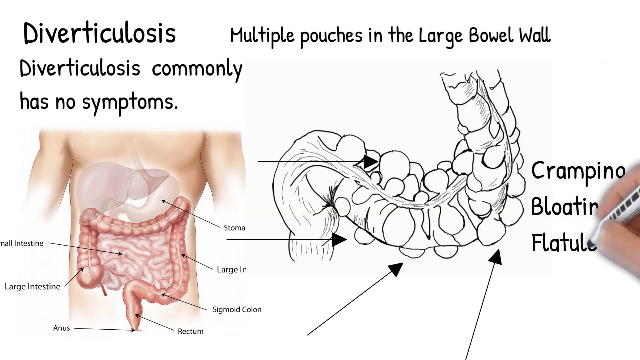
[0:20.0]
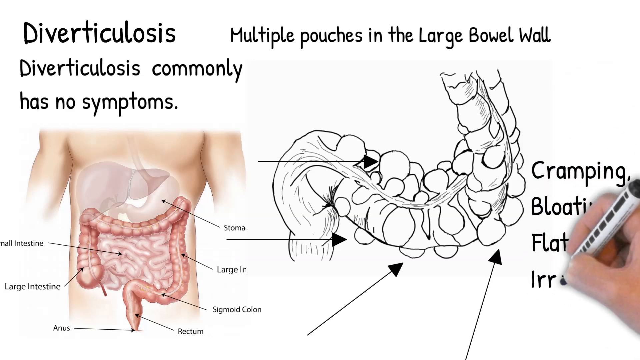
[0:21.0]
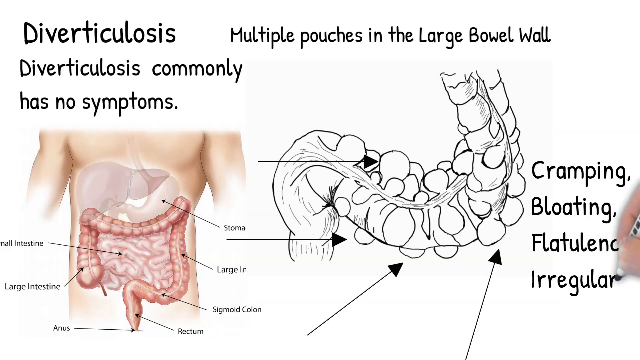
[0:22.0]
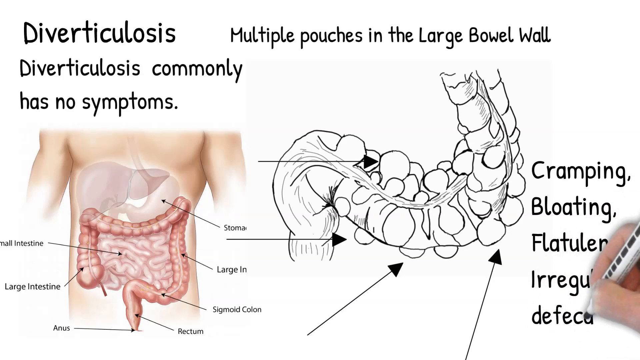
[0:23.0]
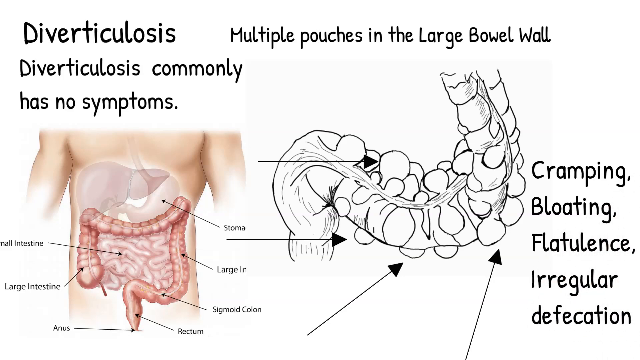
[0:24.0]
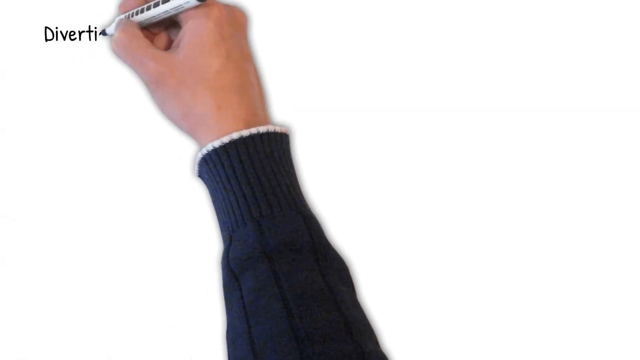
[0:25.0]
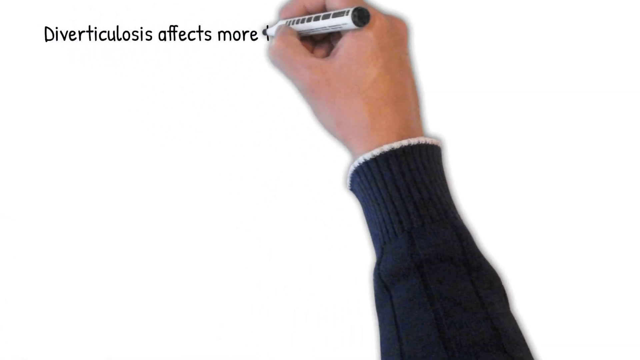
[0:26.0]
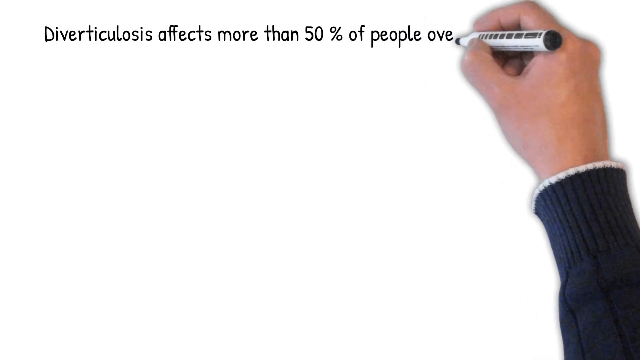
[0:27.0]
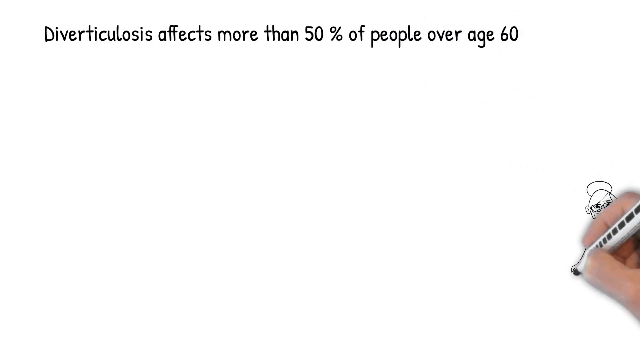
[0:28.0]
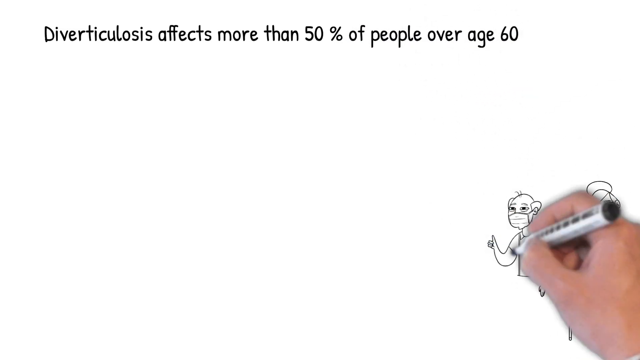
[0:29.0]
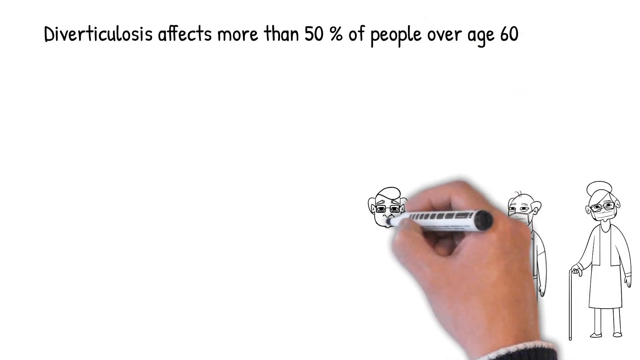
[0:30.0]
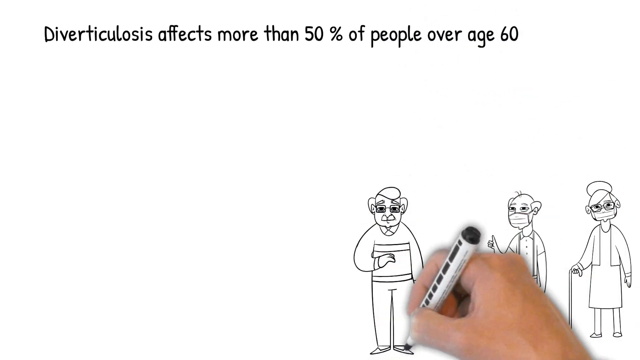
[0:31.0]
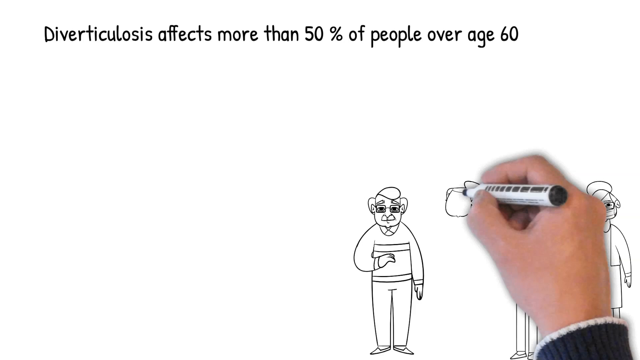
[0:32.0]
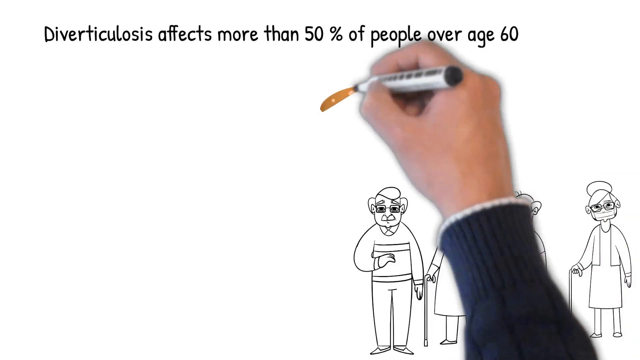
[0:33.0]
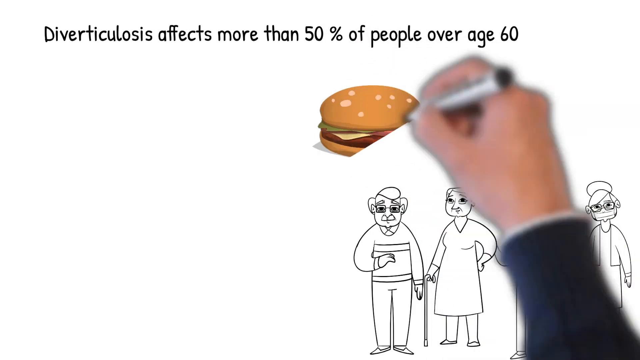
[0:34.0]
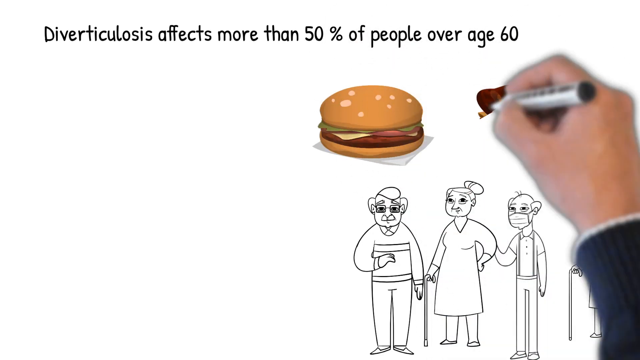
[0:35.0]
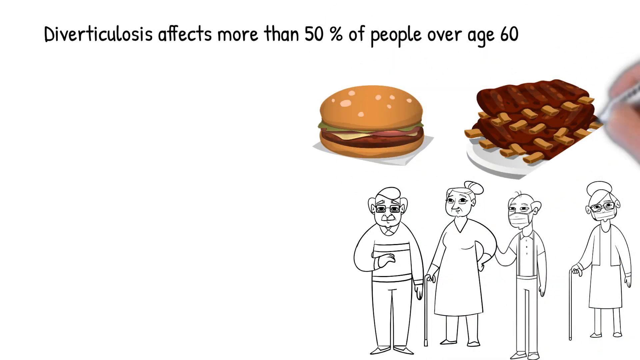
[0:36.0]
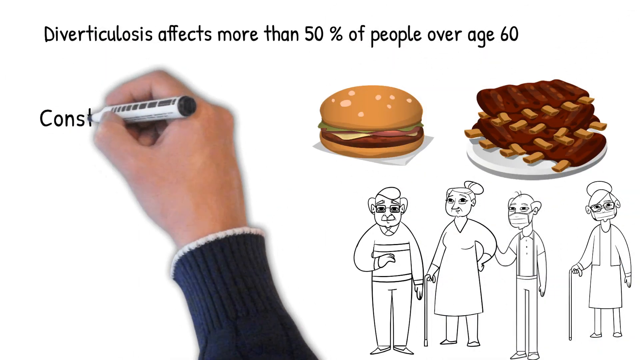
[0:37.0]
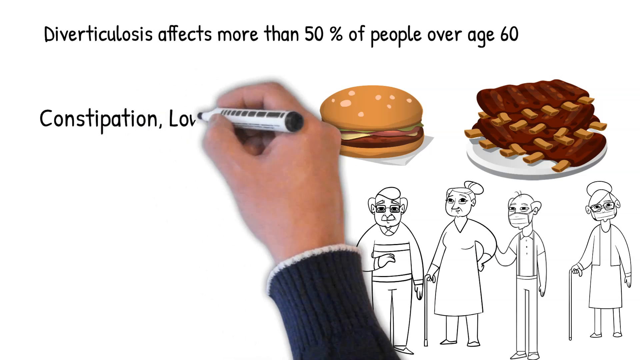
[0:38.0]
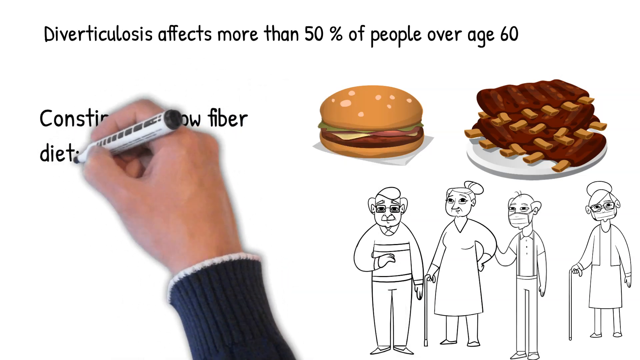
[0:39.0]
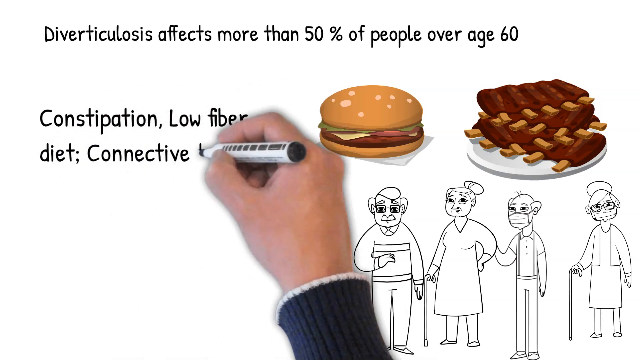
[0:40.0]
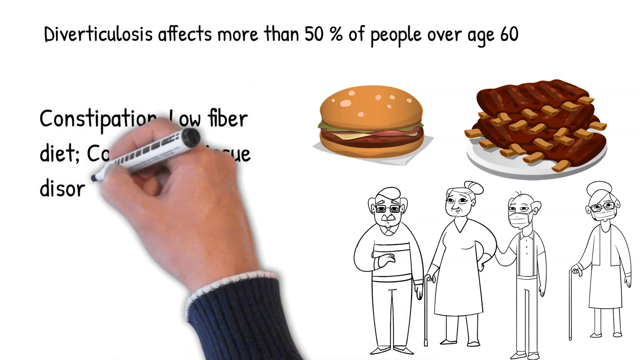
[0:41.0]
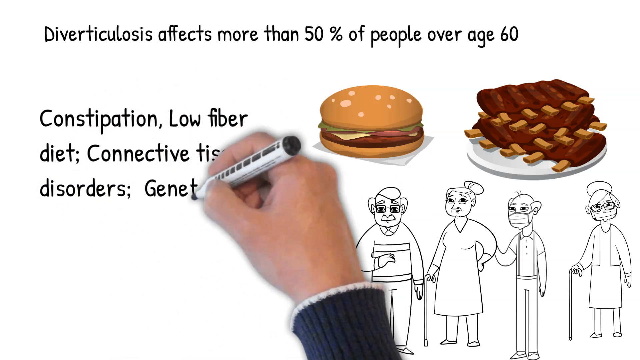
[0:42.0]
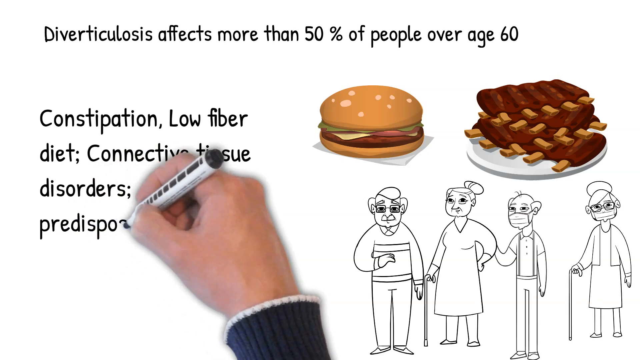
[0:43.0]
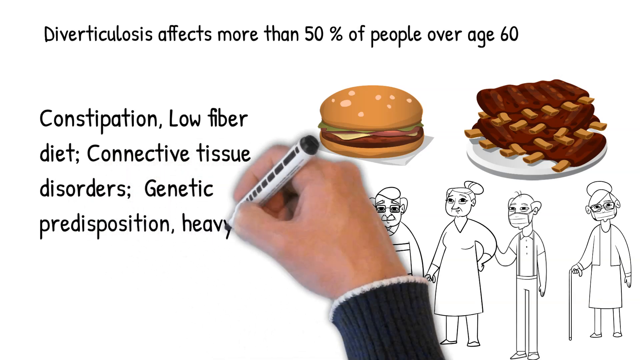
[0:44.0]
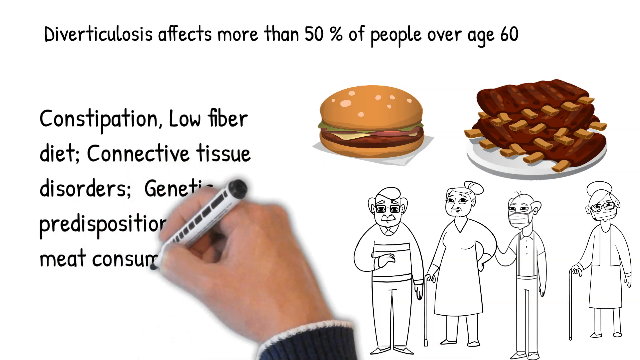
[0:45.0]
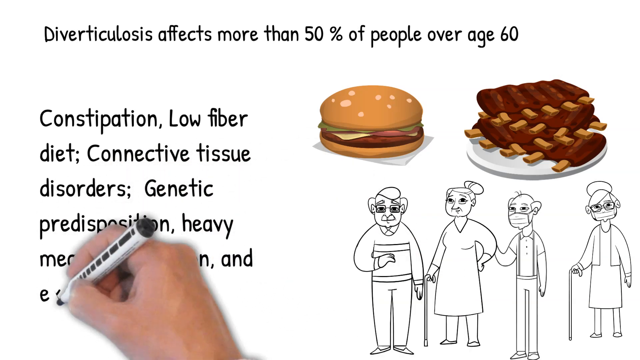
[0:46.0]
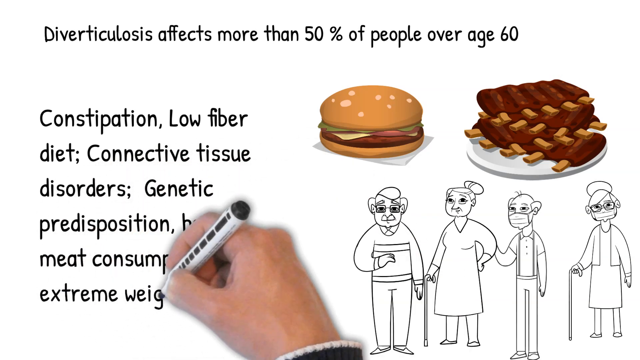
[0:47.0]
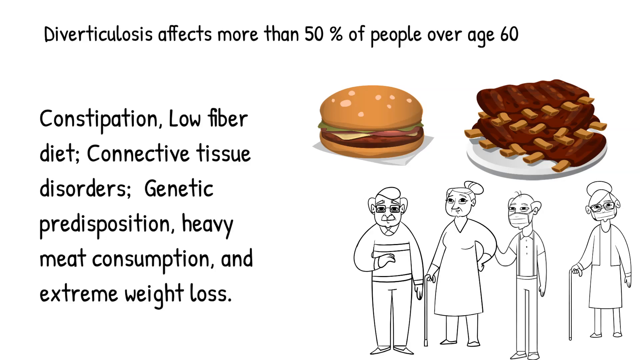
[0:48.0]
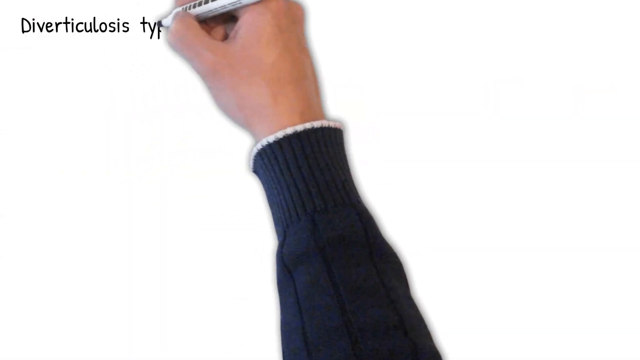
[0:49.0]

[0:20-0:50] The hand writes words next to the diagram: "cramping," "bloating," and "flatulence," along with a word about defecation. Text says that diverticulitis affects more than 50% of people over the age of 60, and a picture of four older people with canes is drawn. More text lists constipation, low fiber diet, connective tissue disorders, genetic predisposition, heavy meat consumption and extreme weight loss. Above the picture of the elderly people is a picture of a hamburger and a rack of ribs. The hand in the black sleeve writes each of the words out individually with what looks like a whiteboard marker and colors in the pictures with it.